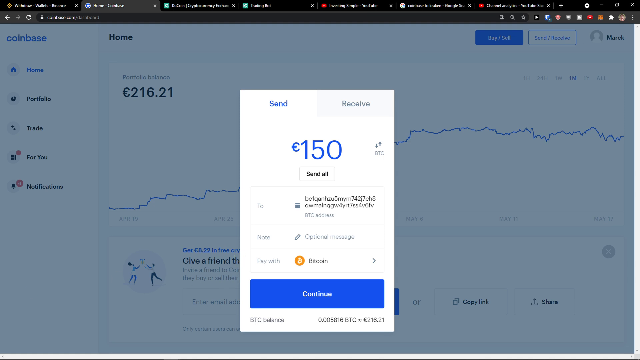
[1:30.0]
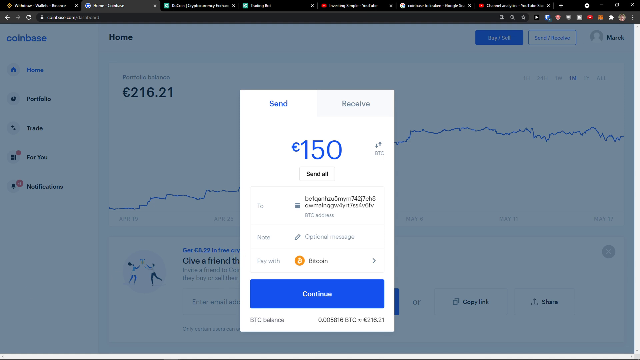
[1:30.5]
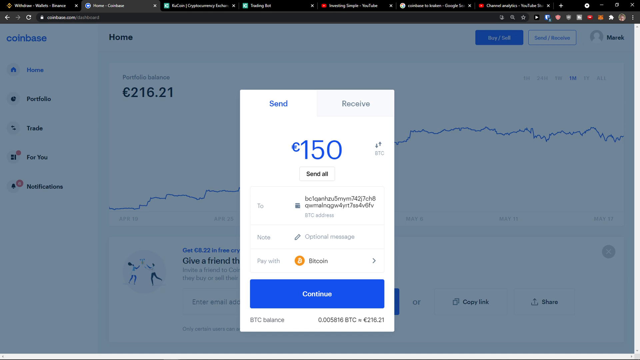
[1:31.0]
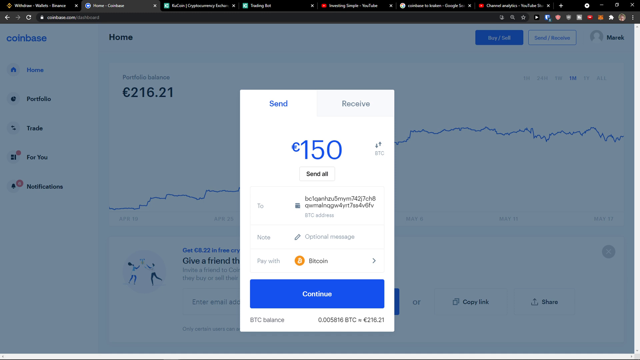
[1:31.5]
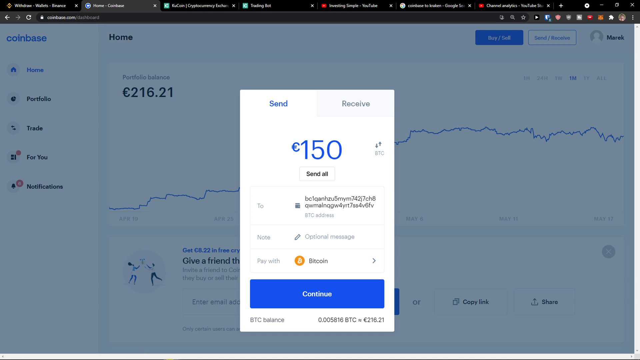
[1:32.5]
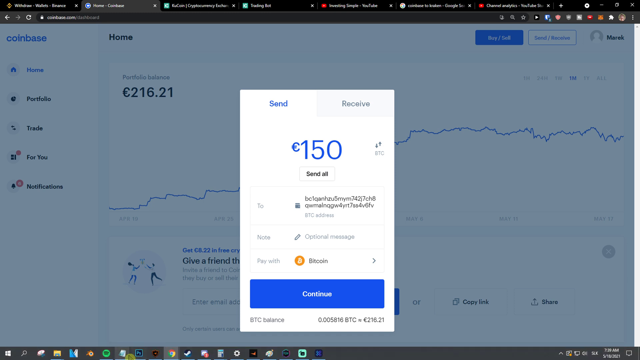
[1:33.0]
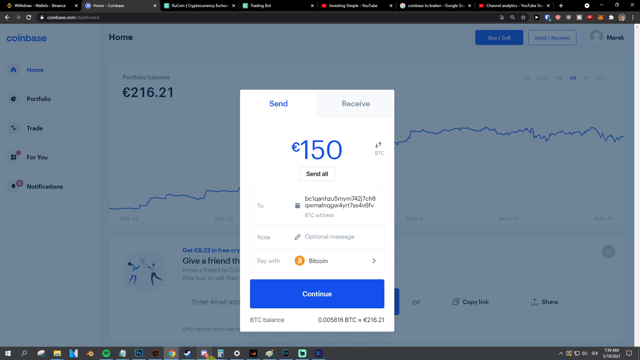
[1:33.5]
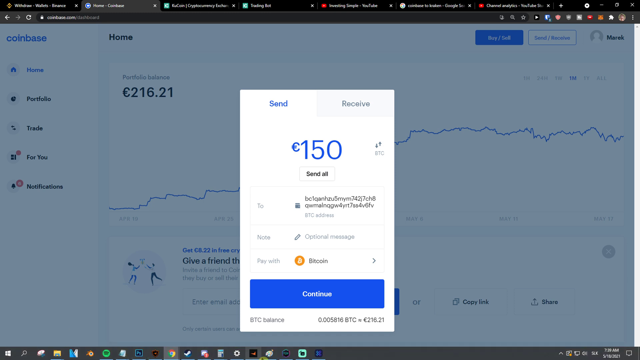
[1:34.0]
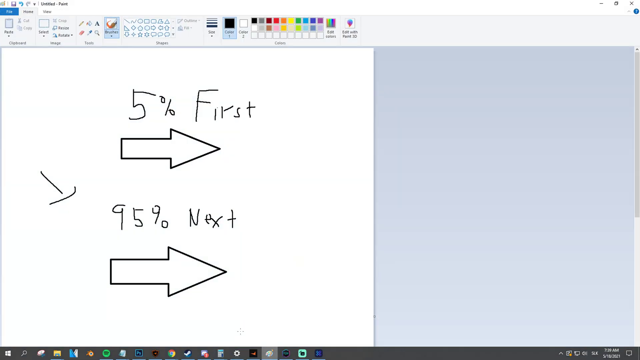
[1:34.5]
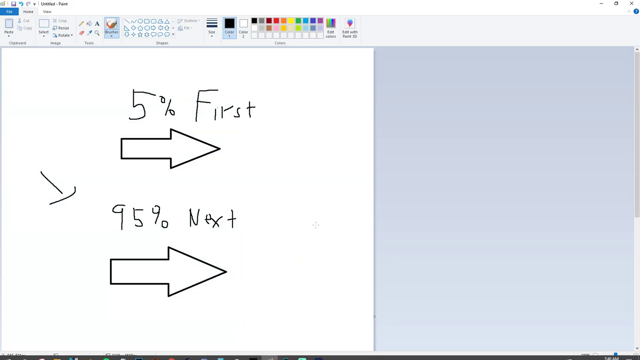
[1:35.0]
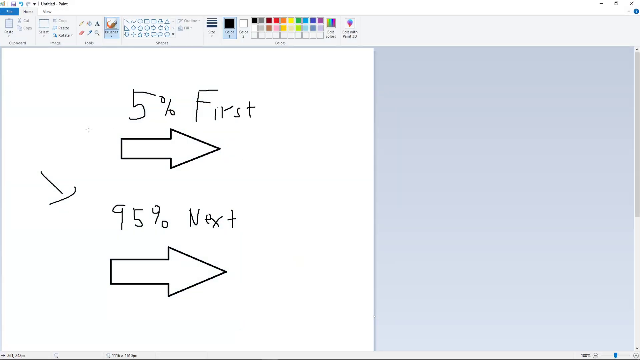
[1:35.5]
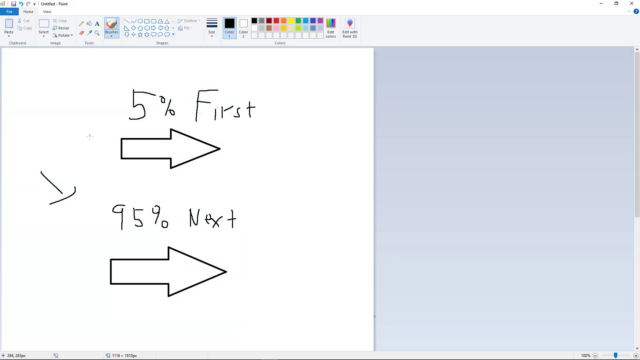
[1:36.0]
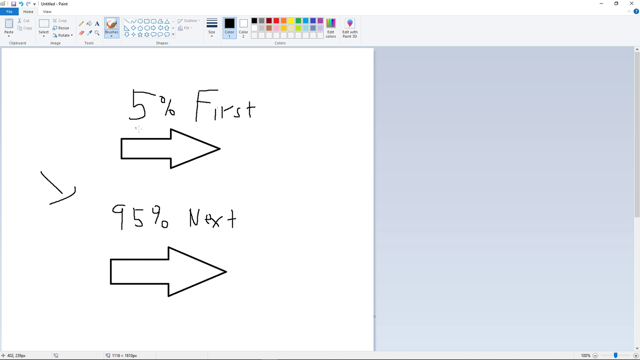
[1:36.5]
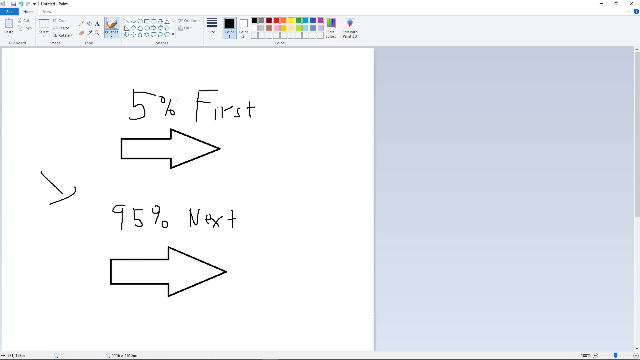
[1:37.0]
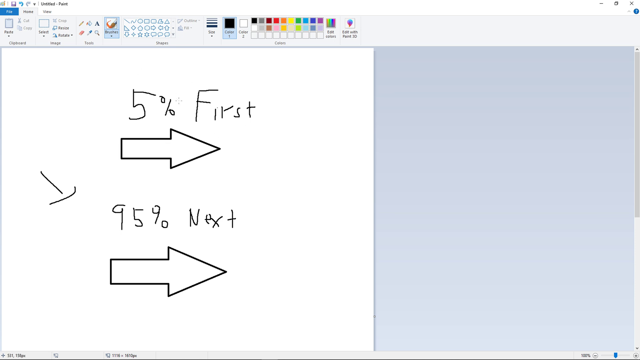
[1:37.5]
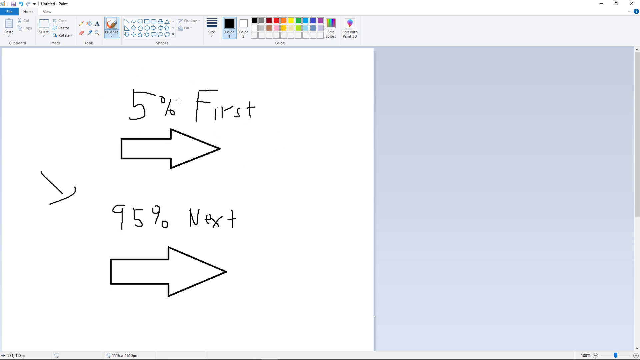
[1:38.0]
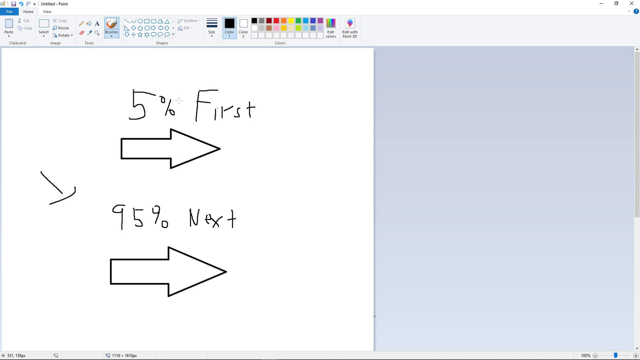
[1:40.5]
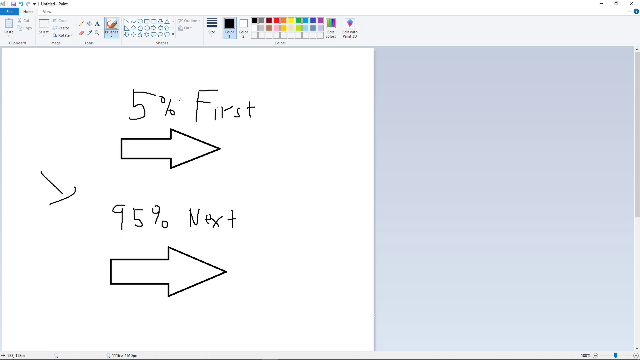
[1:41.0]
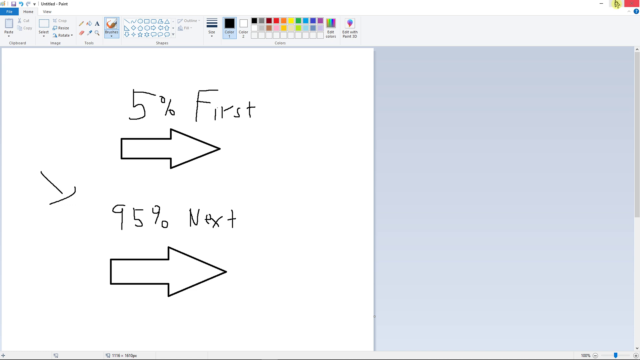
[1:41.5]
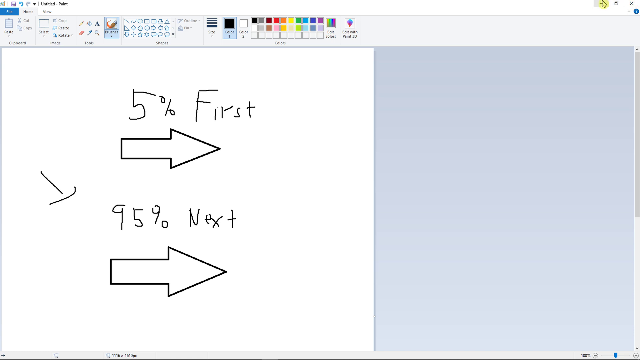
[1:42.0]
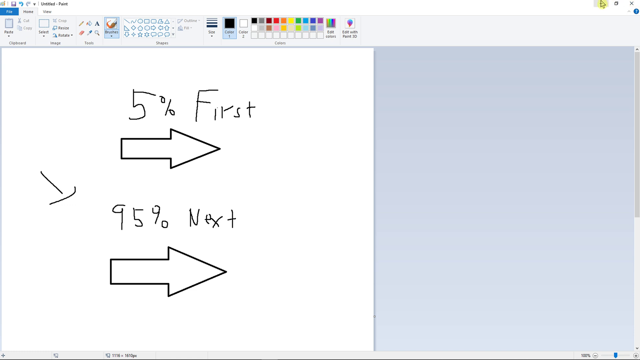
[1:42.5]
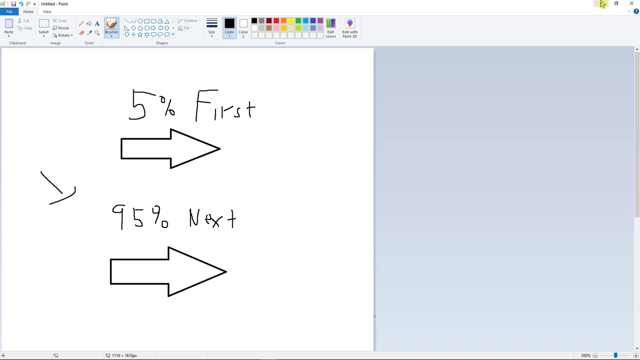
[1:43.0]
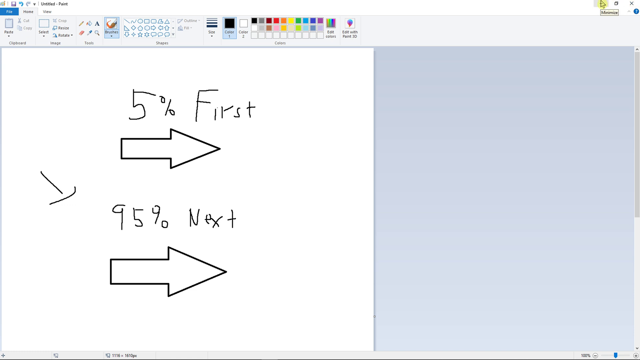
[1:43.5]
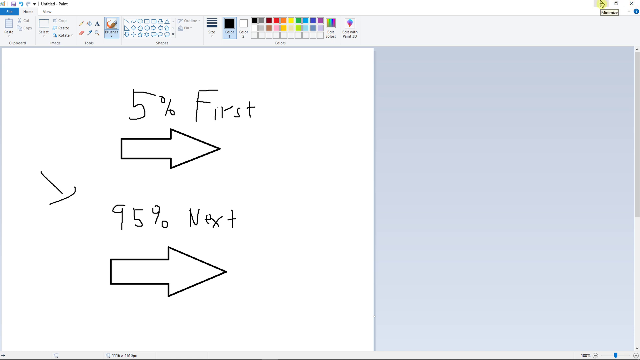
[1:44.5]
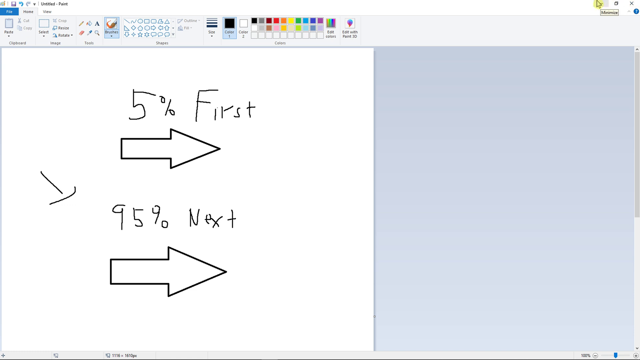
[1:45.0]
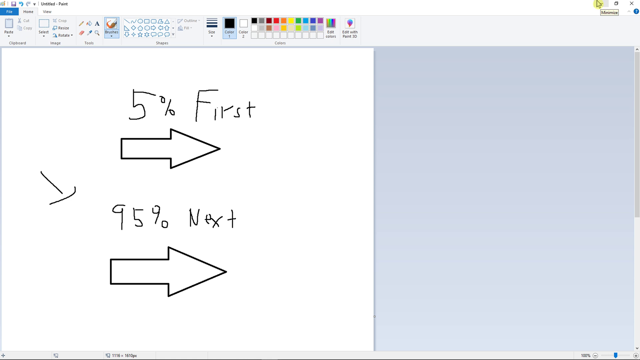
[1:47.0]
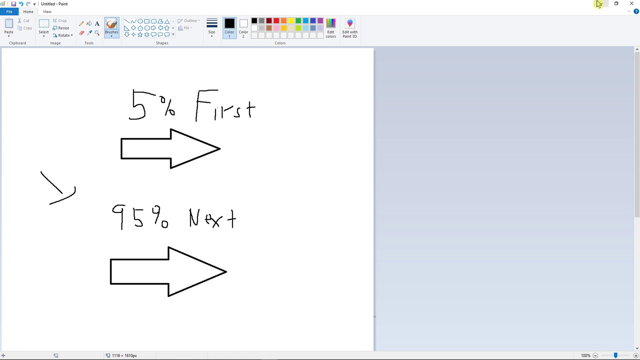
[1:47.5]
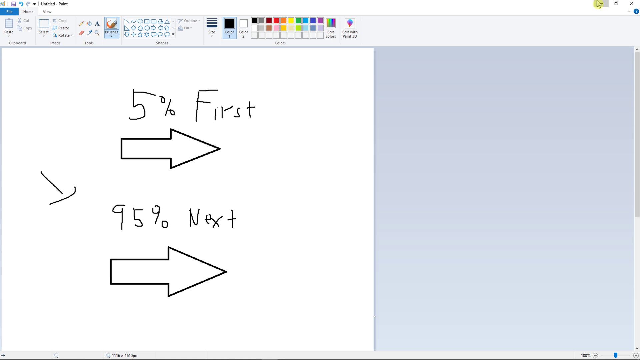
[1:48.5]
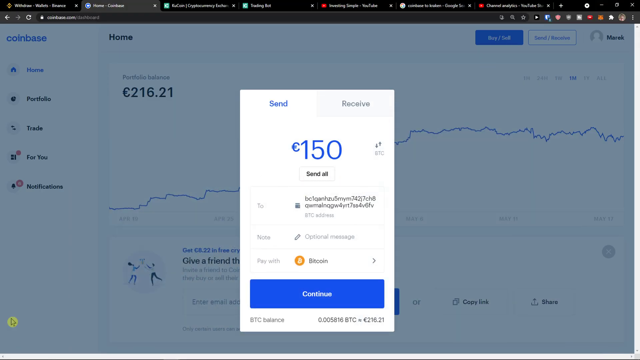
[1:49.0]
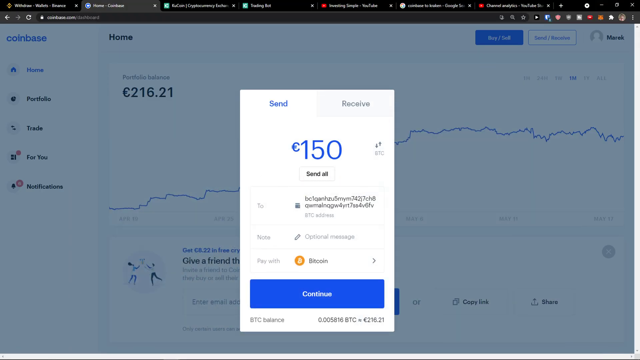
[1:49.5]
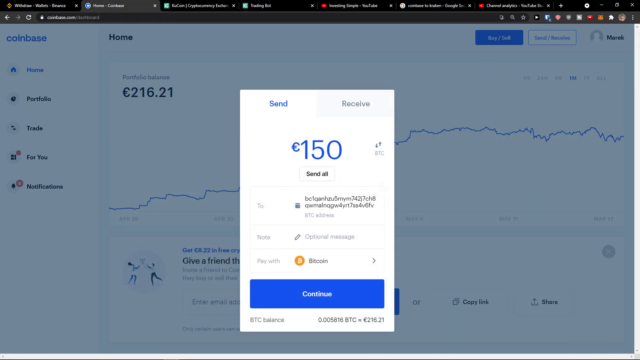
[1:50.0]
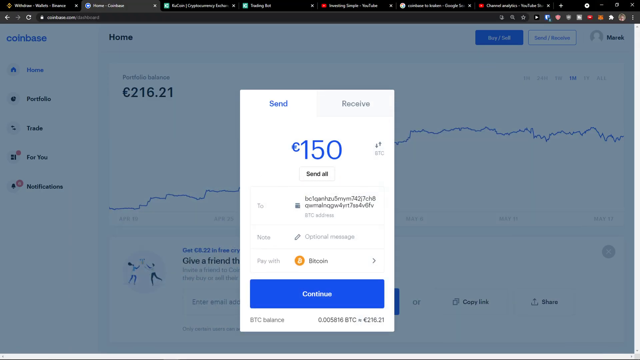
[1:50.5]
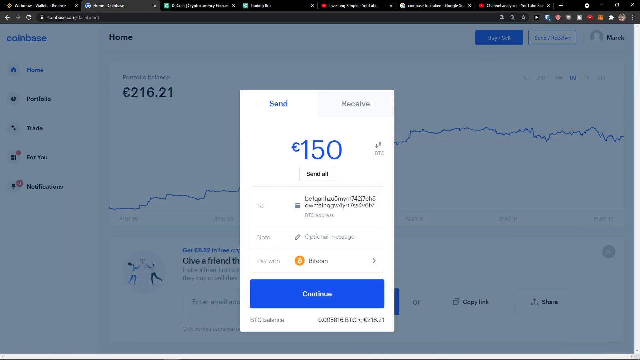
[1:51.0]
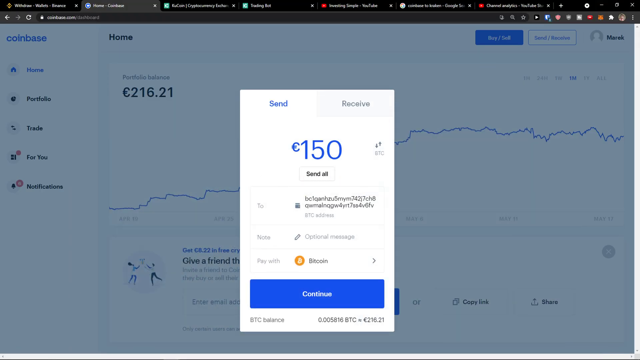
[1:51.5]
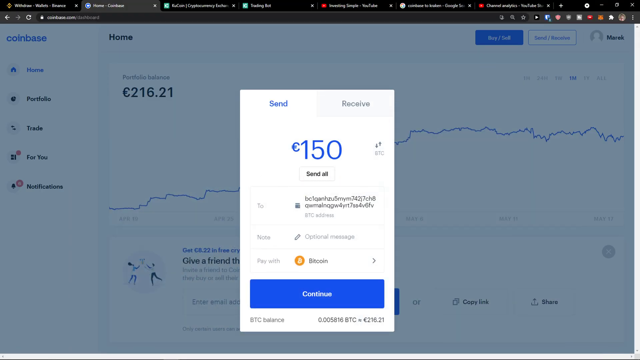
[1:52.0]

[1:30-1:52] A still image of the screen recording shows the Coinbase website grayed out with a blue tint and a panel open for sending or receiving money, set to 150, in what looks like European dollars. Suddenly the panel disappears and something completely new appears: a light bluish-gray background with what looks like a white piece of paper on the left. On it is very messy hand-drawn writing, almost like a five-year-old's handwriting, possibly drawn with the mouse cursor. It says "5% first", followed by an arrow that looks like a PowerPoint-type arrow rather than hand-drawn, and underneath that "95% next" with another arrow. The writing is not shown being drawn; it is just there. The yellow arrow mouse cursor flies up to the top right of the screen, and the window apparently is closed, as it very quickly disappears down to the bottom, and the Coinbase website is visible again.